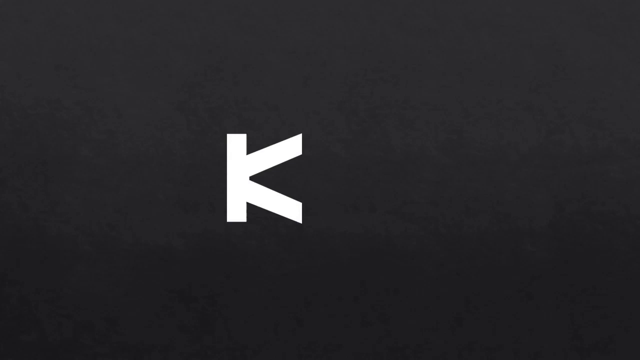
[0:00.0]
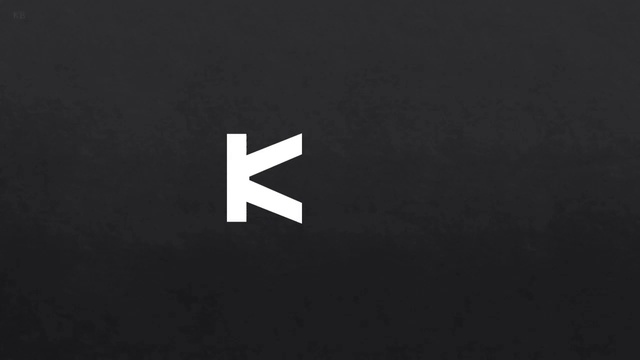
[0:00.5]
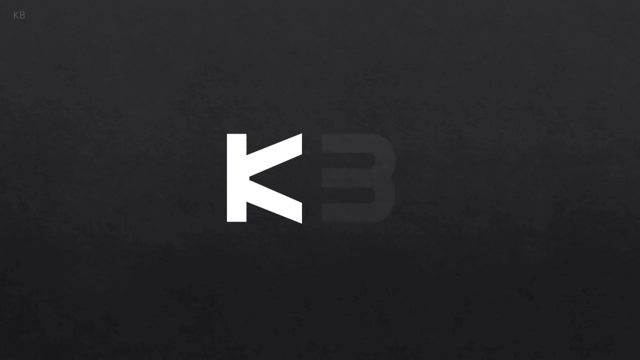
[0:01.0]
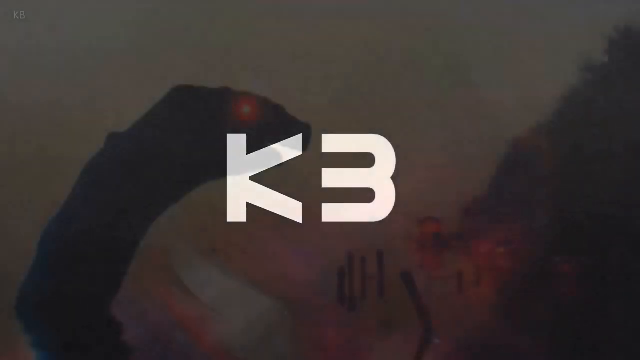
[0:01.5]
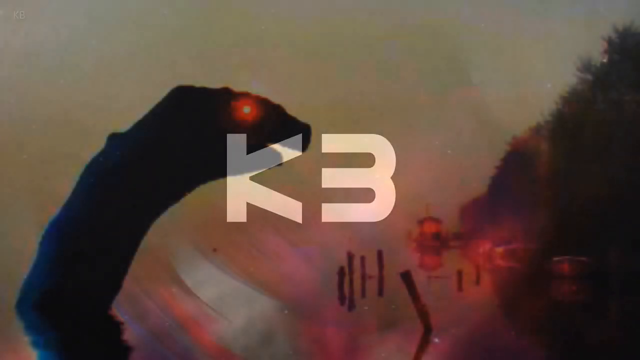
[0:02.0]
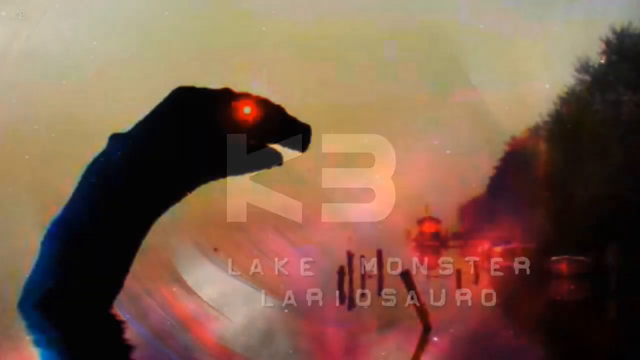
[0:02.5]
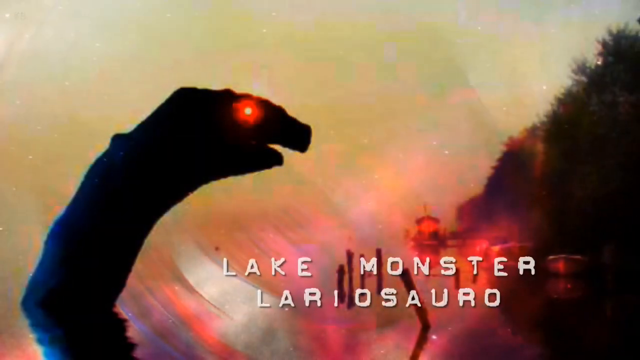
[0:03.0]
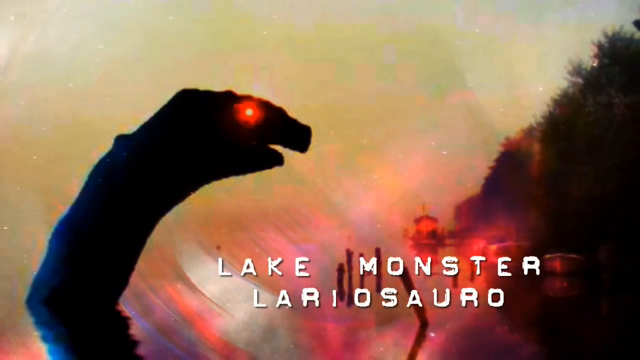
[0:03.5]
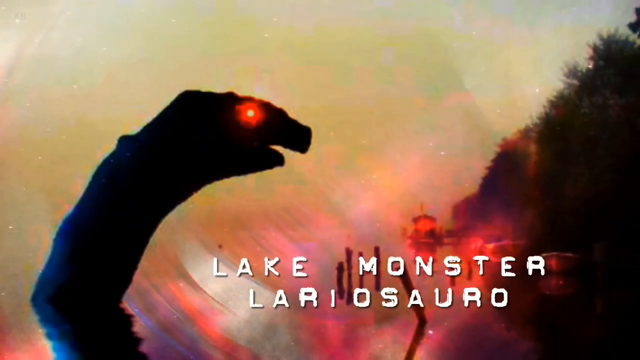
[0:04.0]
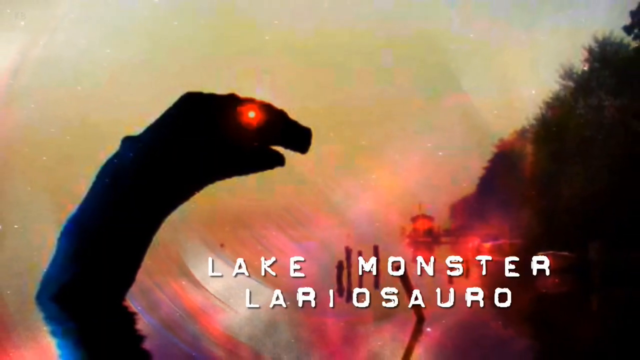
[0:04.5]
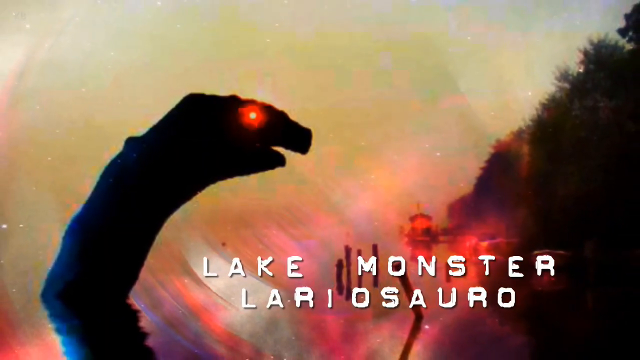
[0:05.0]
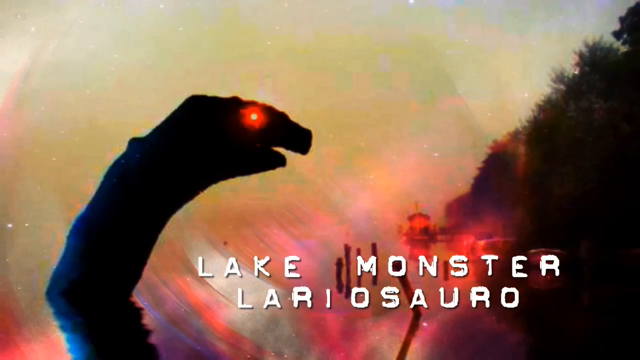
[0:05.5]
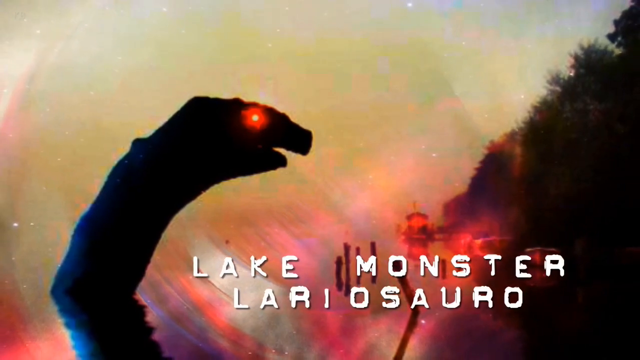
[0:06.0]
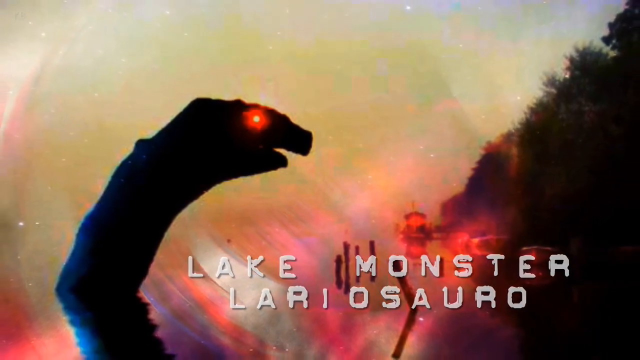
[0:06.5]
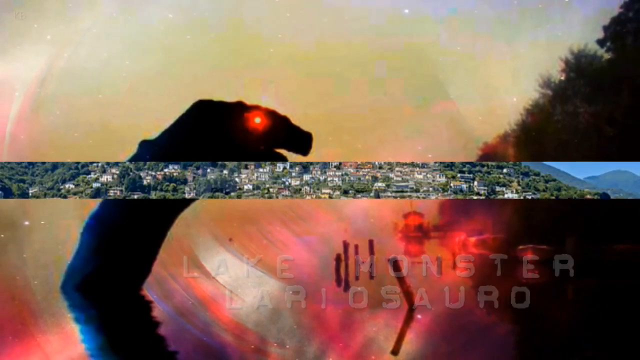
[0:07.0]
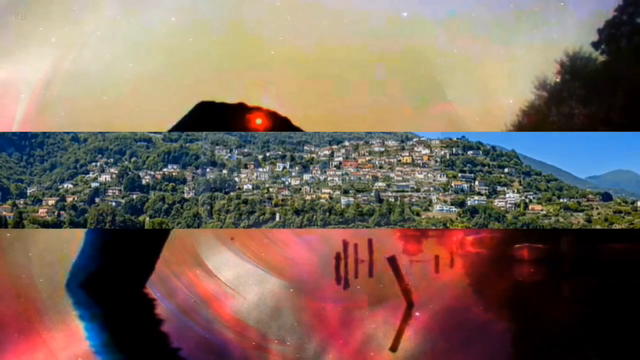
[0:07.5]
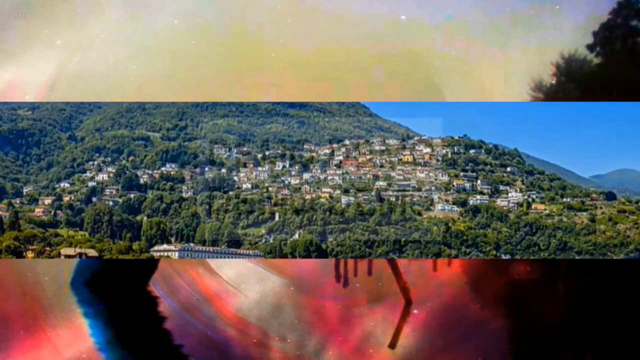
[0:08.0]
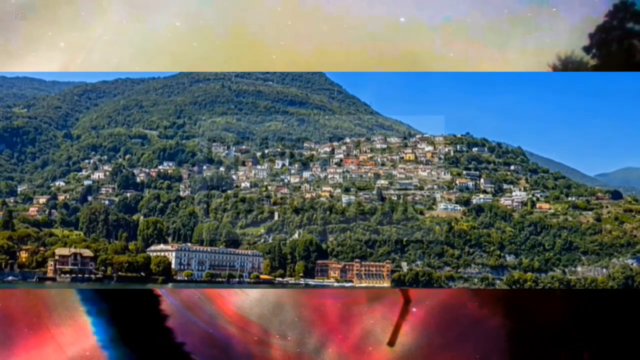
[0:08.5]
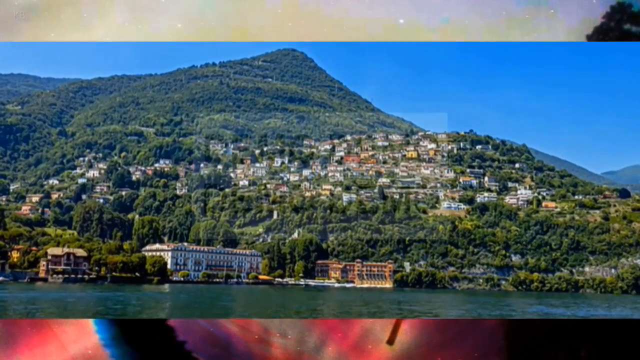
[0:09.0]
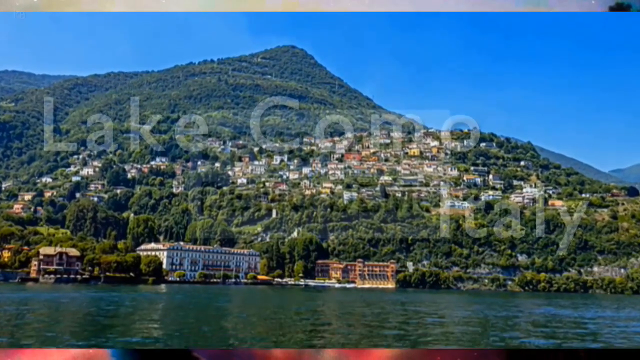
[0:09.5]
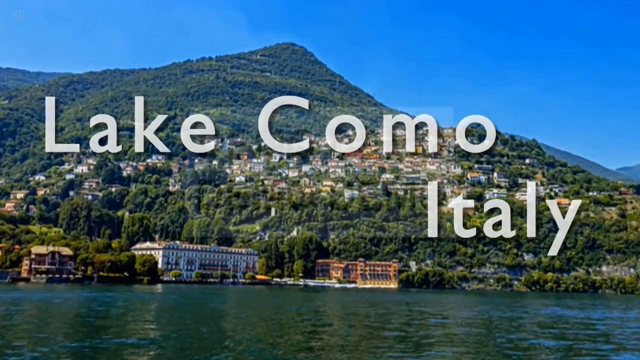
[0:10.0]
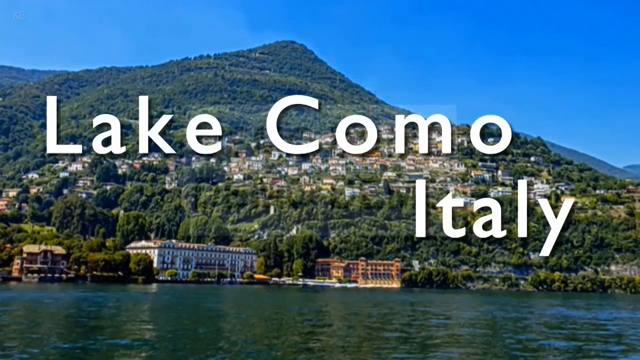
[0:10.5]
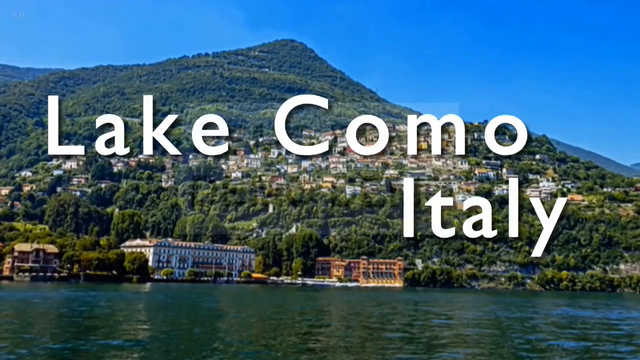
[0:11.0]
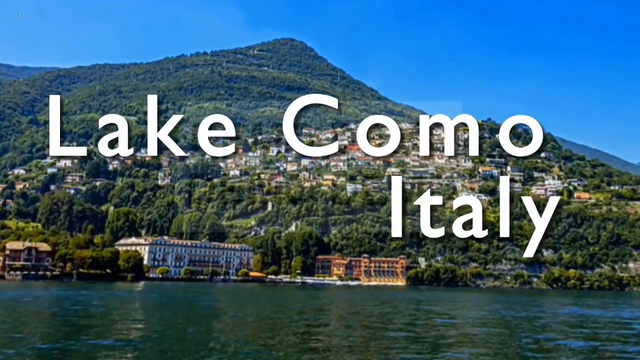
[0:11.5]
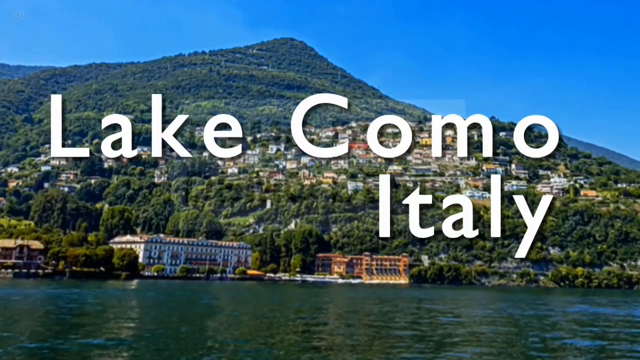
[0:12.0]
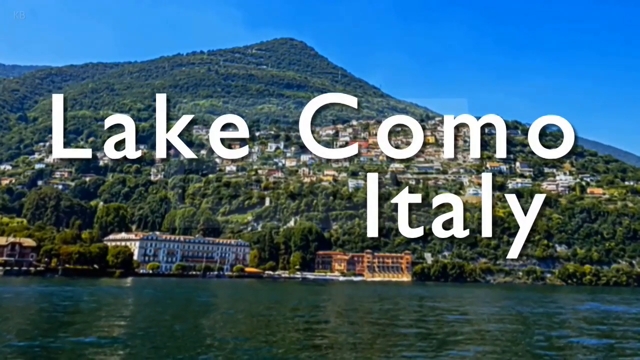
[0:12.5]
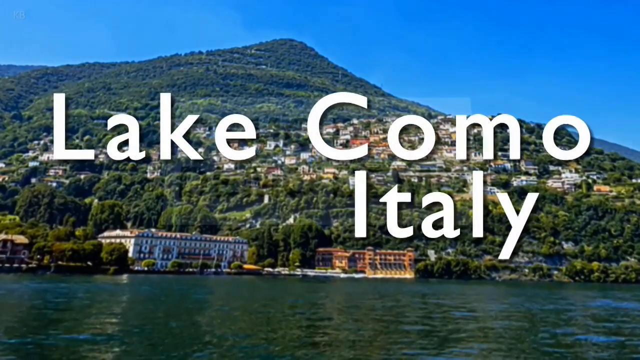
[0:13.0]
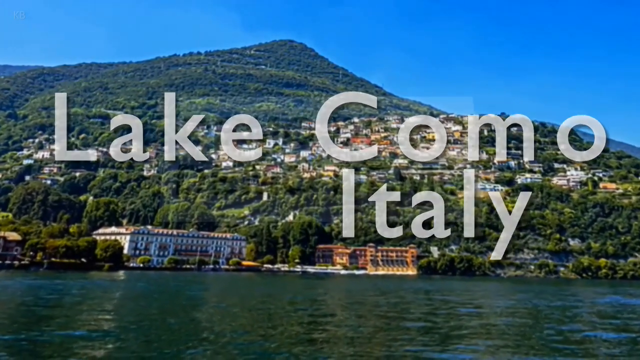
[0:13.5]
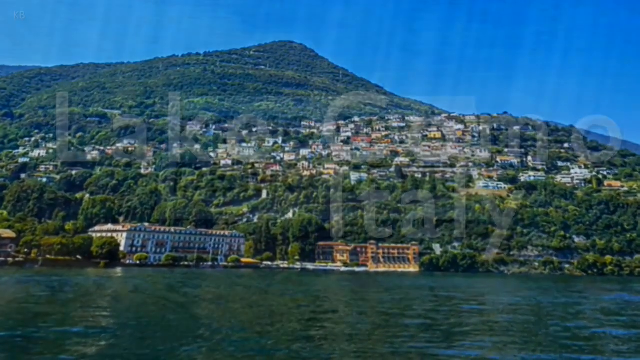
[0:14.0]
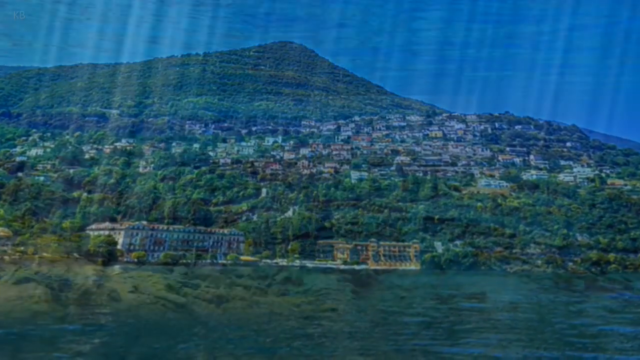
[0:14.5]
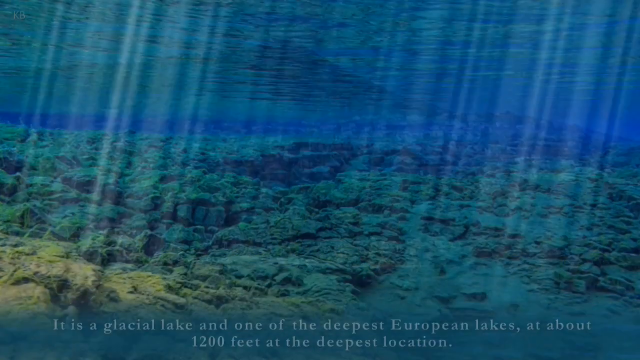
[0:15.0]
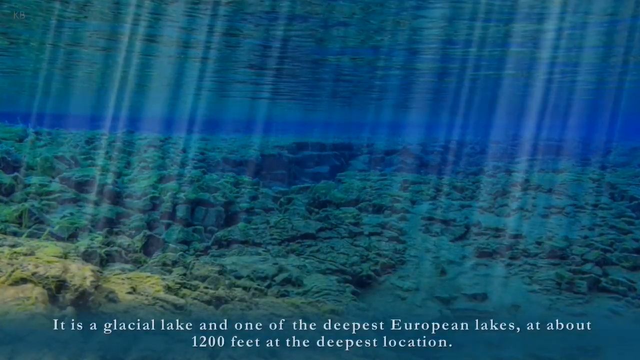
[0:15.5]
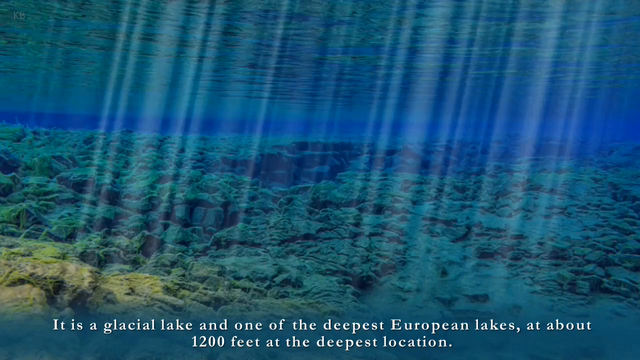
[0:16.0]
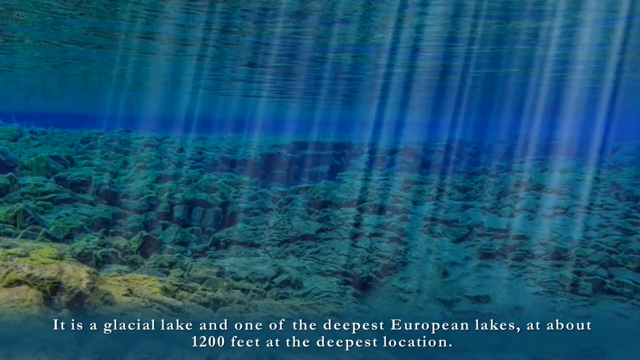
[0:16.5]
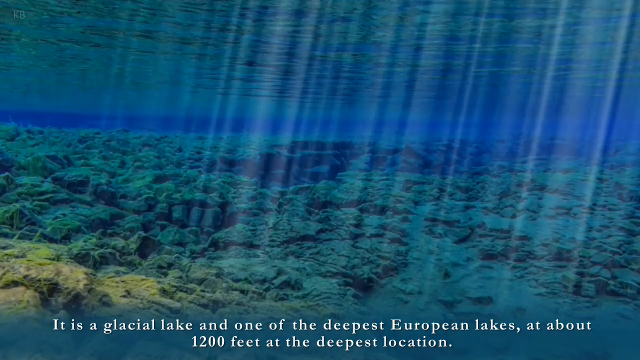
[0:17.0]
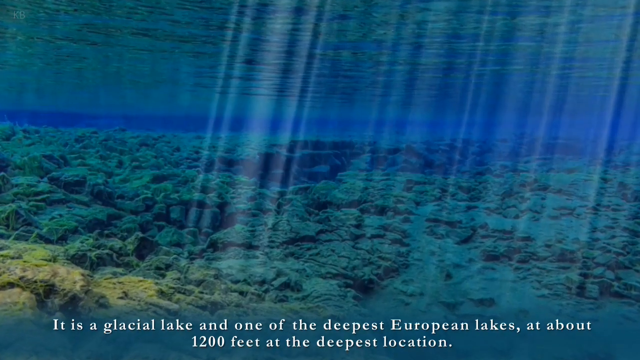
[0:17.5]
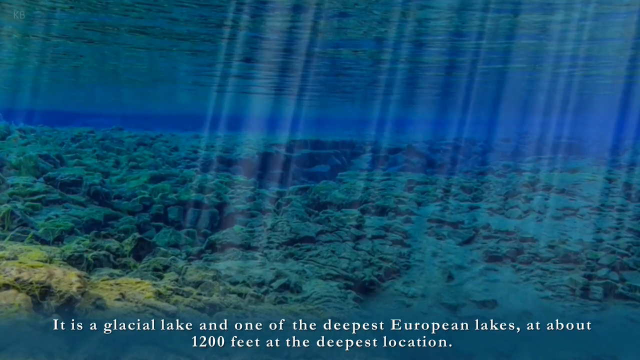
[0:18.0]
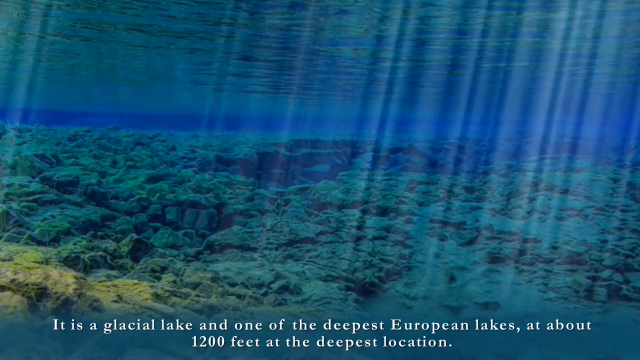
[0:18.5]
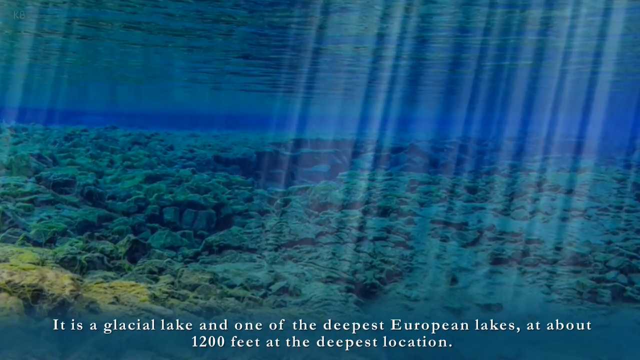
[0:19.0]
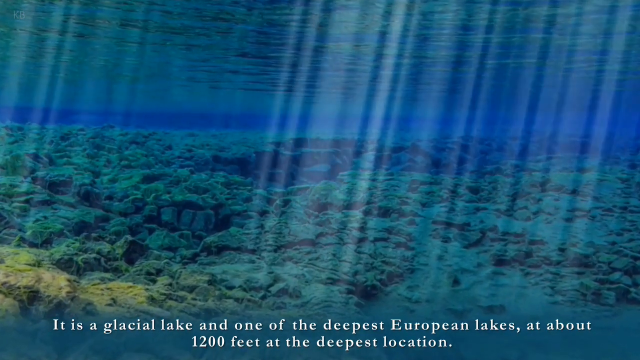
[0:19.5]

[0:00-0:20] The video shows Lake Como, Italy, with a house next to the lake and a blue sky. Text on the screen reads "K3, Lake Monster, Lariosauro" and identifies the lake as "Lake Como, Italy." Further text describes it as "a glacious lake and one of the deepest European lakes," about 1,200 feet at its deepest.